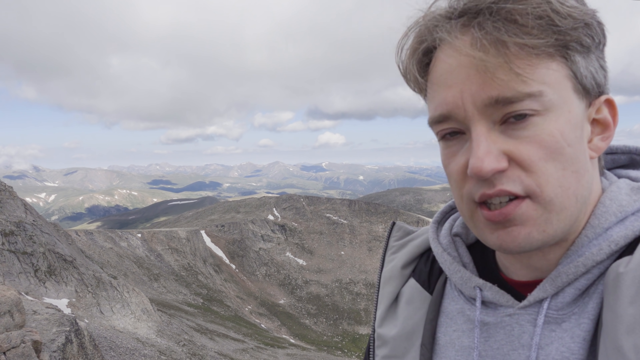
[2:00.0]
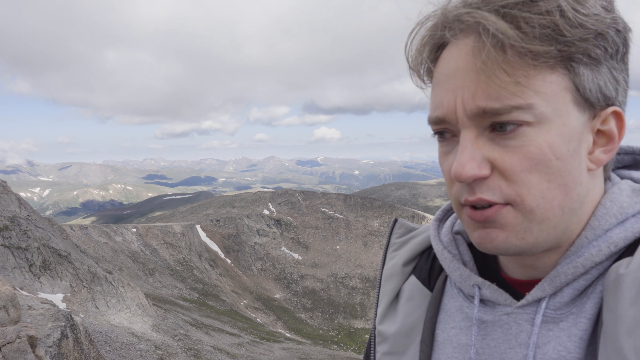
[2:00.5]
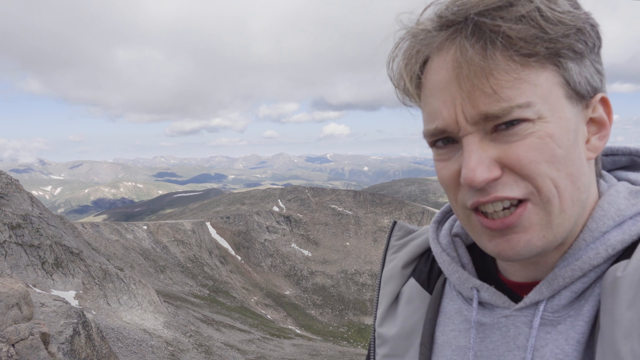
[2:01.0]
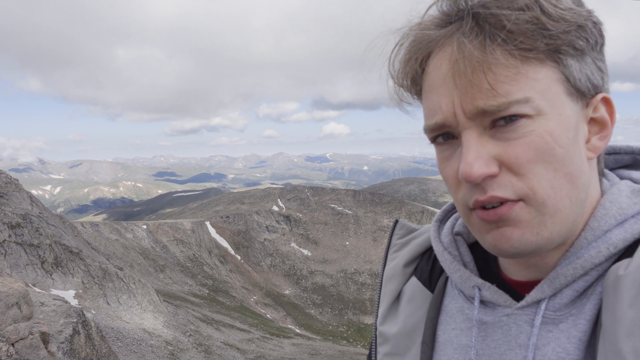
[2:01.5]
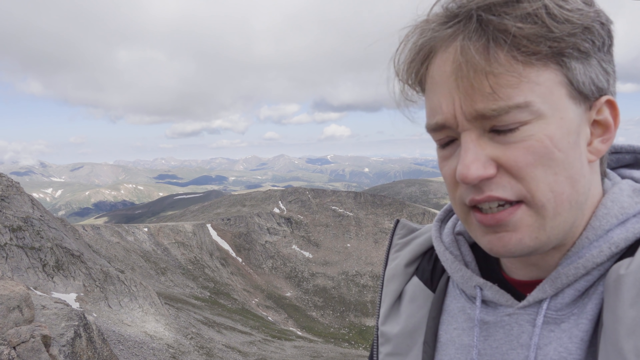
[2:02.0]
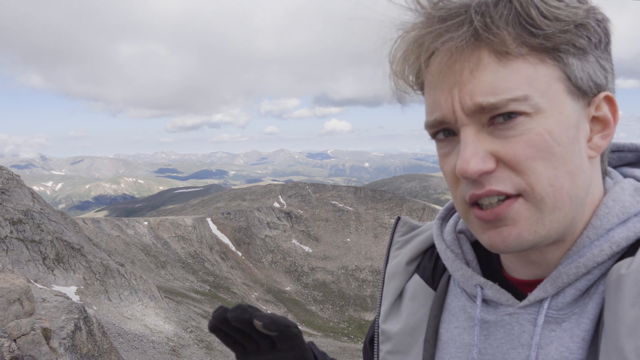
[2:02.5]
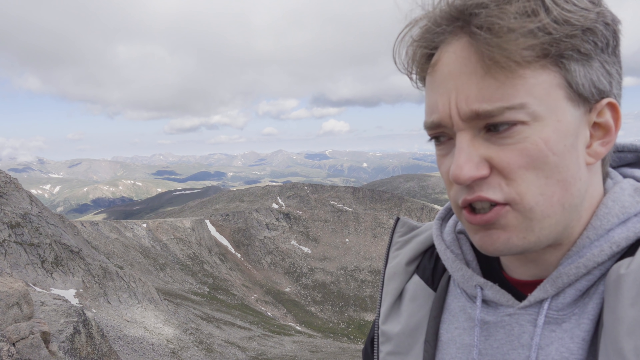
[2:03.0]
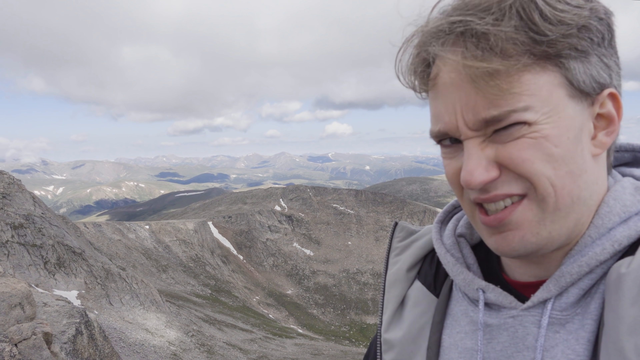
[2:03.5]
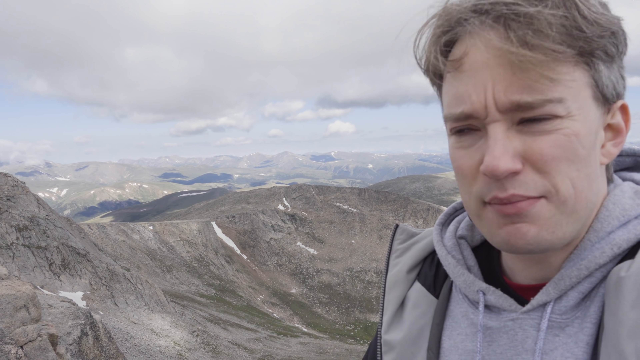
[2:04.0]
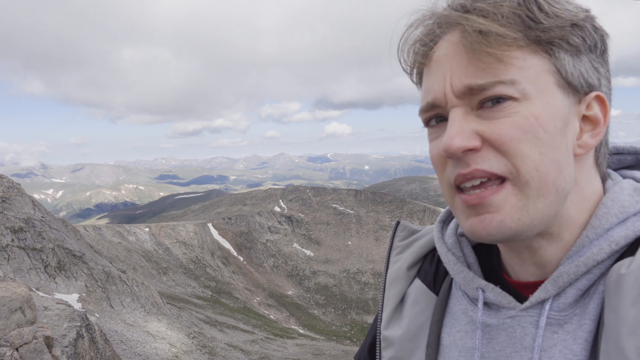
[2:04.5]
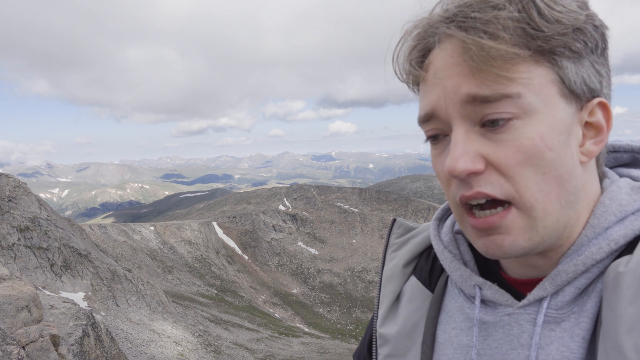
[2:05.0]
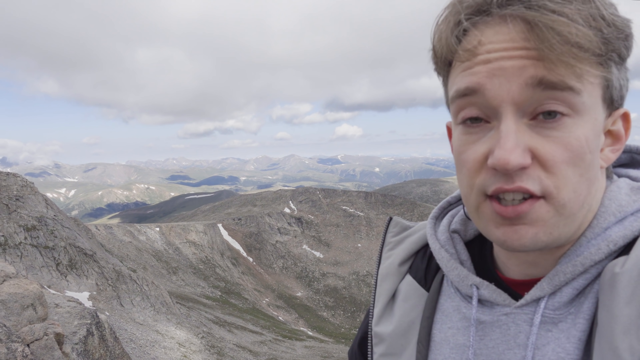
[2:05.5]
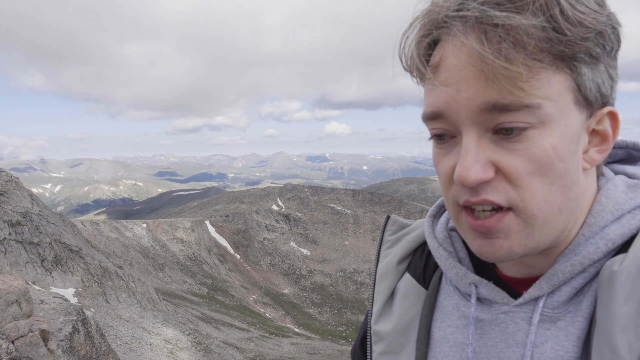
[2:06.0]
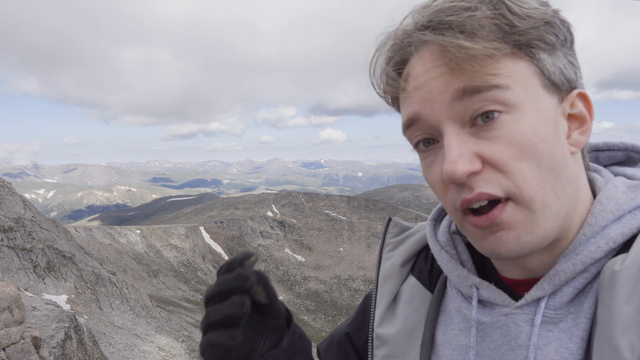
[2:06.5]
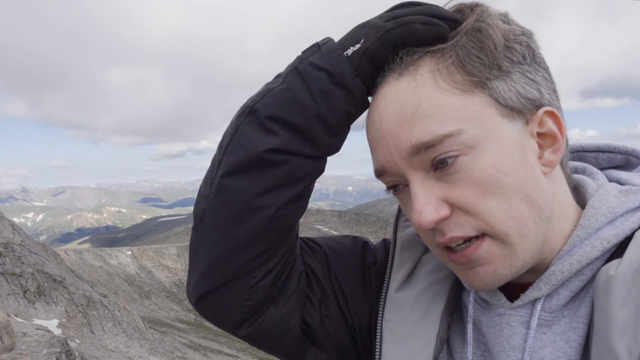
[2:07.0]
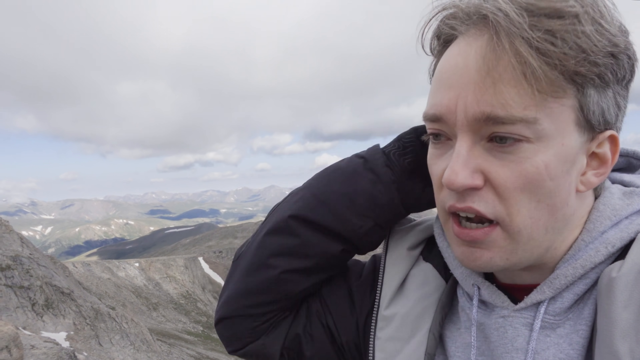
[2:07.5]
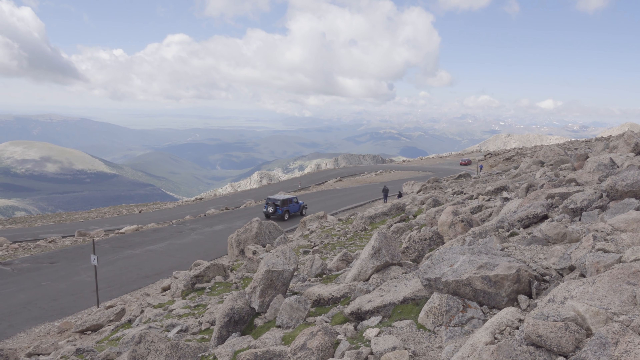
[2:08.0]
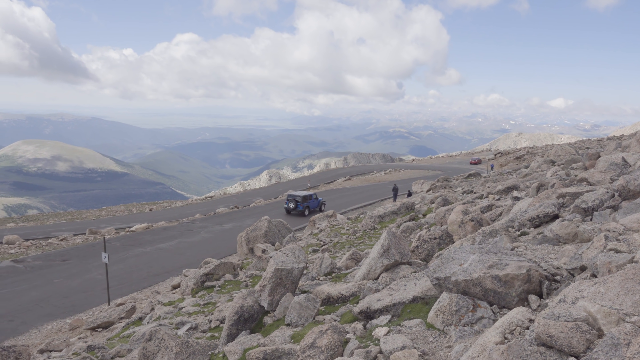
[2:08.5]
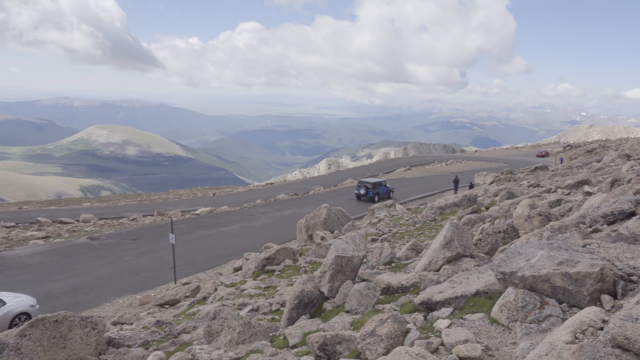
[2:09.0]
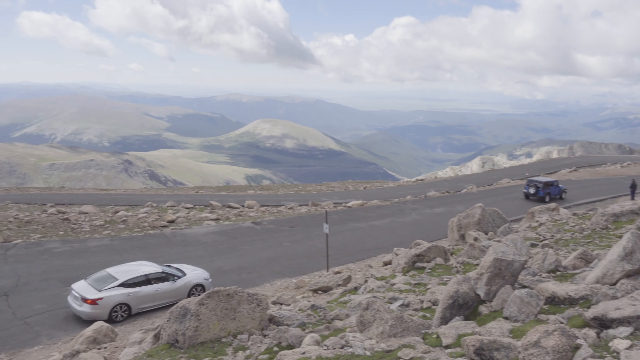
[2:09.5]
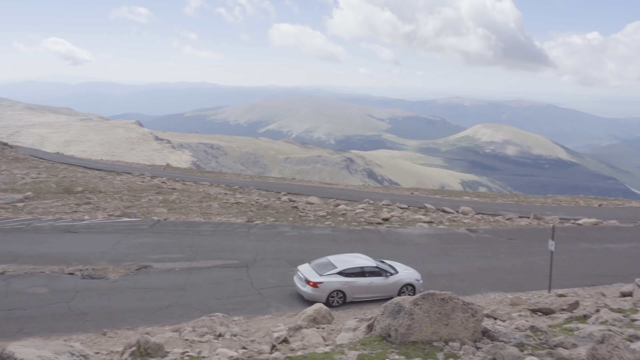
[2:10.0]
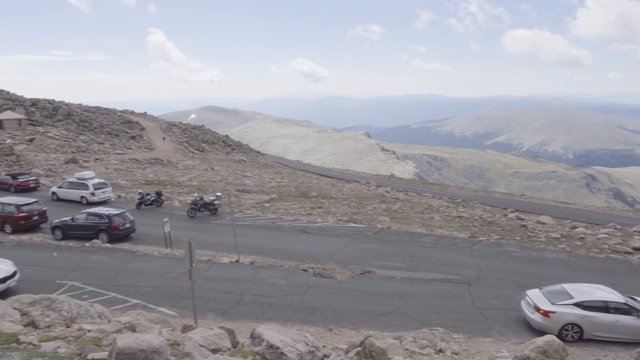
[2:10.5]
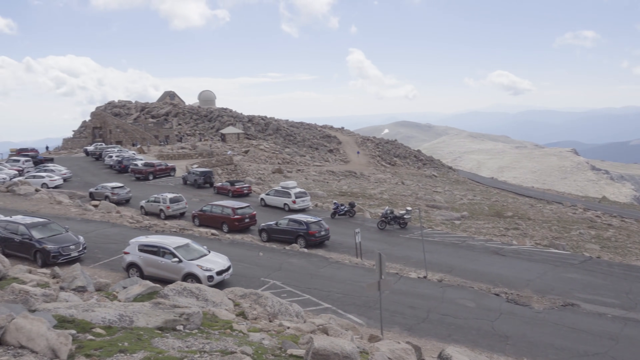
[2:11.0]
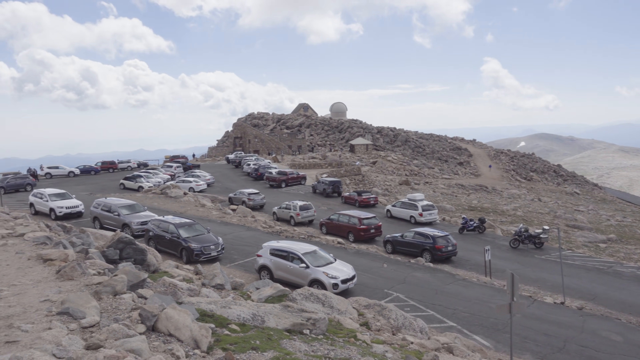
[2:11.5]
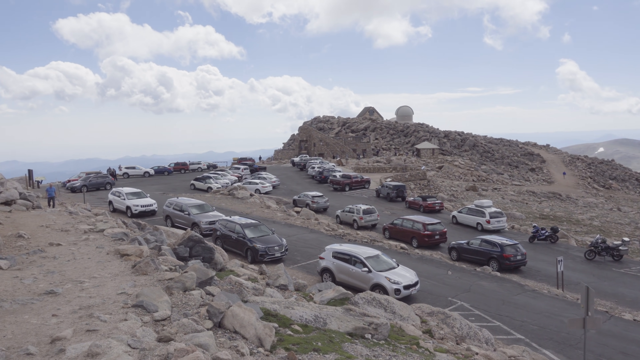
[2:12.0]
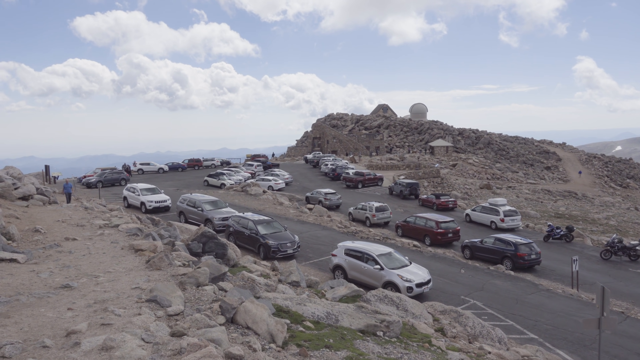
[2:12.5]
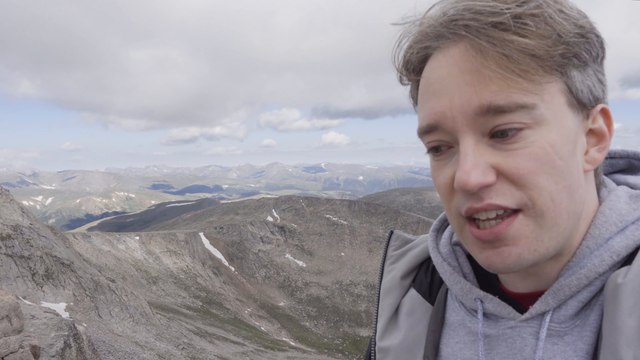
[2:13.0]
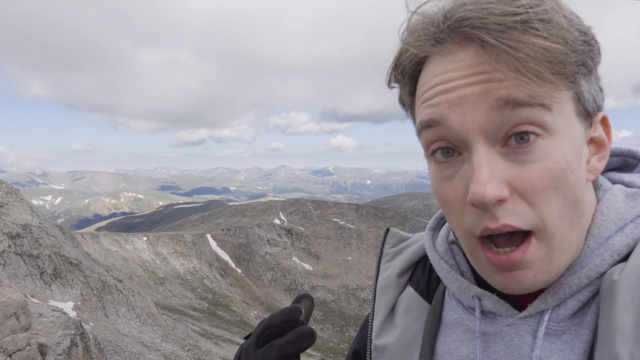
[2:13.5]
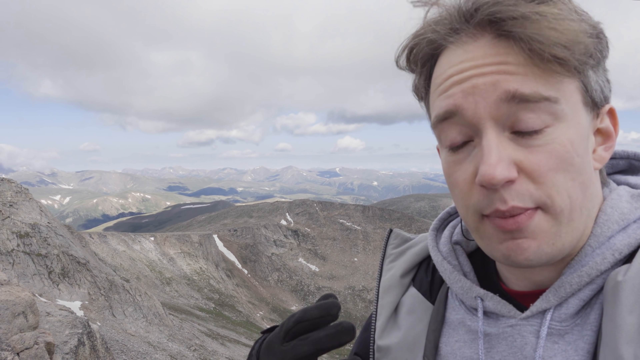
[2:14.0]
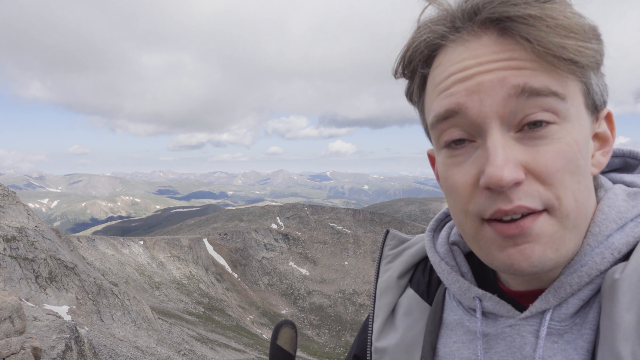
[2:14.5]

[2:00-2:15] The man who has been speaking to the camera brushes his hair back with his hand. The shot cuts to a pan of the road below the mountain, where a Jeep is driving. The camera slowly pans left to many cars that all appear to be parked, with tourists walking around the area near them. Along the road are buildings being explored by the tourists, and there are many rocks around the area of the parked cars and buildings. It is daytime, and the sky appears blue with white clouds.